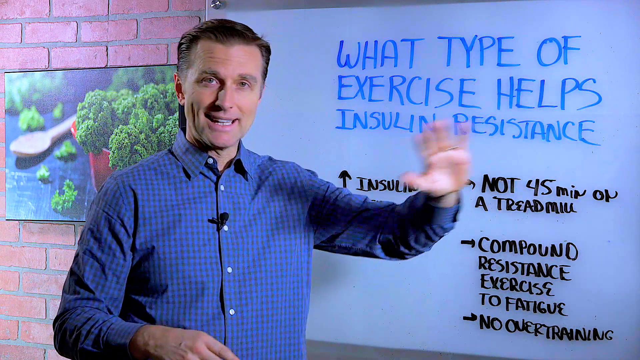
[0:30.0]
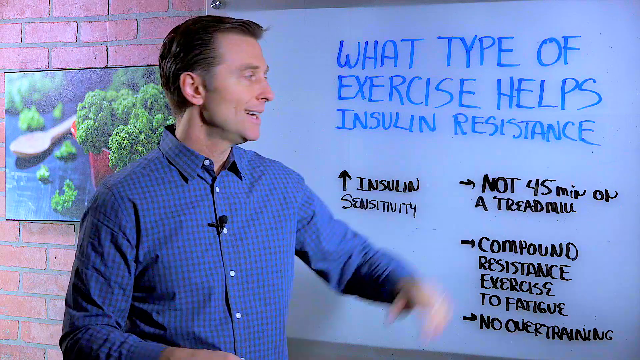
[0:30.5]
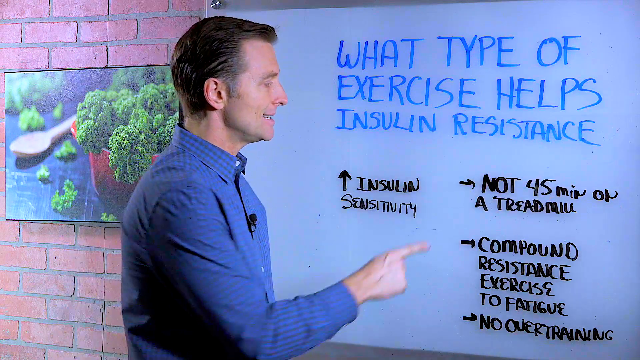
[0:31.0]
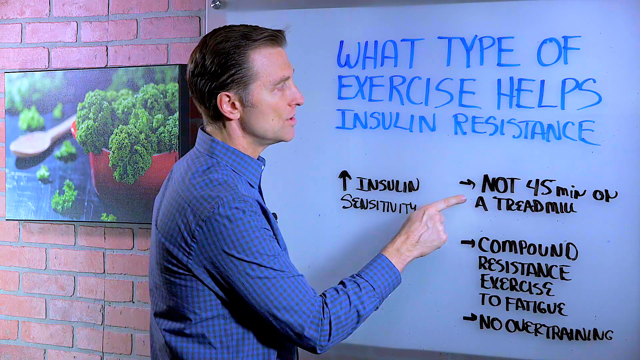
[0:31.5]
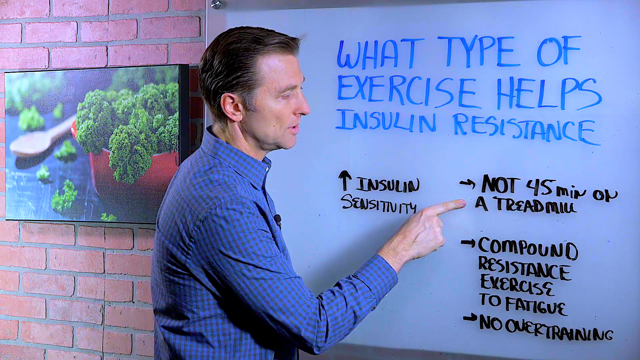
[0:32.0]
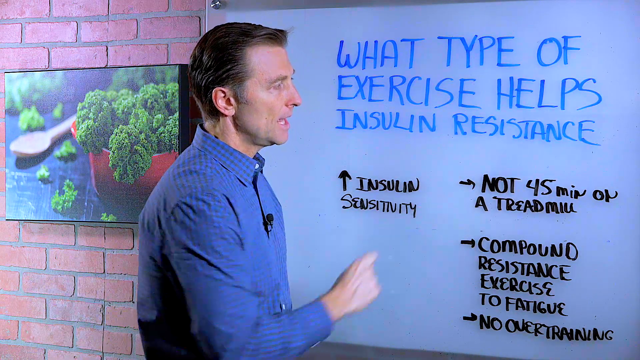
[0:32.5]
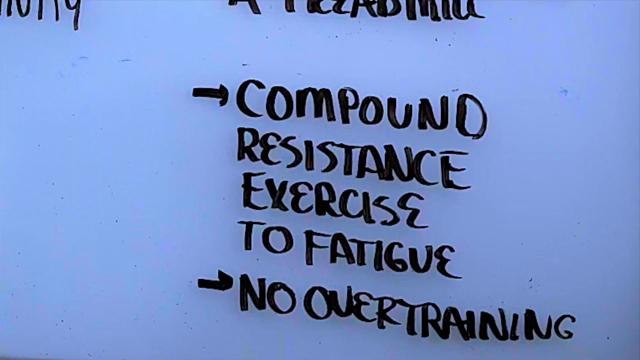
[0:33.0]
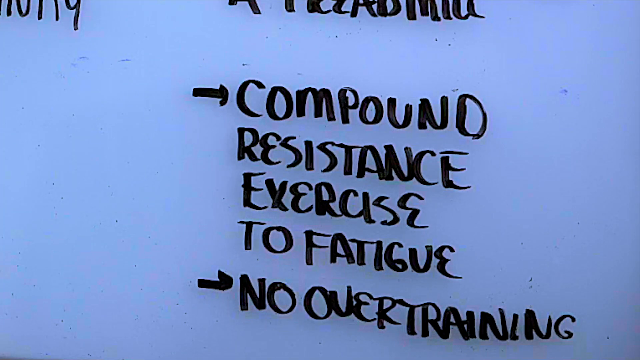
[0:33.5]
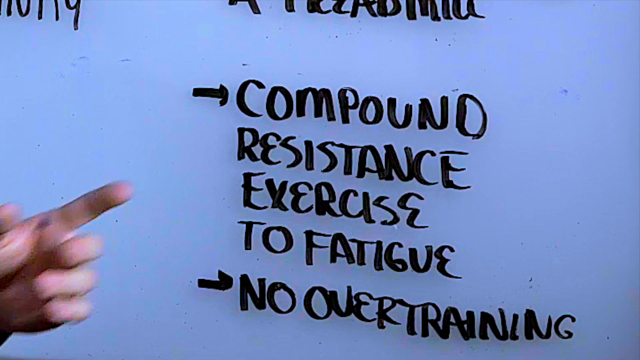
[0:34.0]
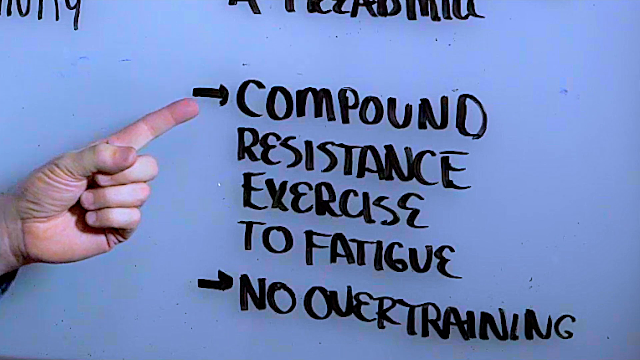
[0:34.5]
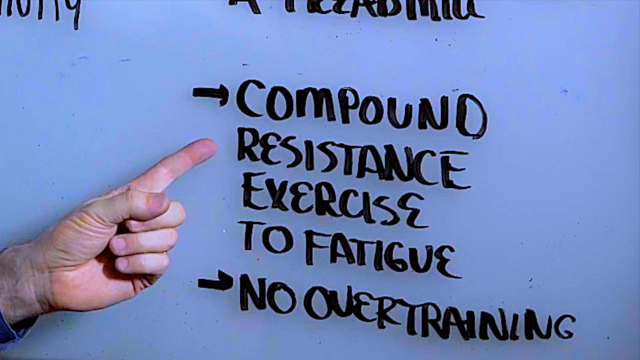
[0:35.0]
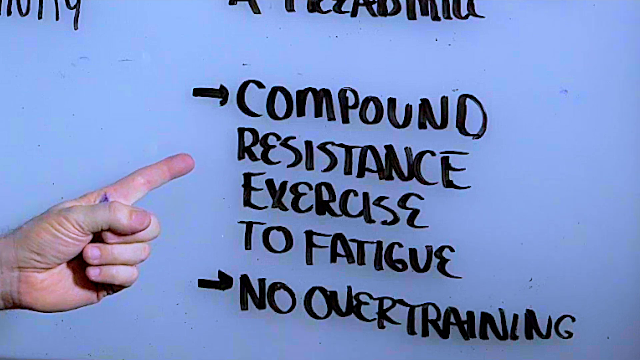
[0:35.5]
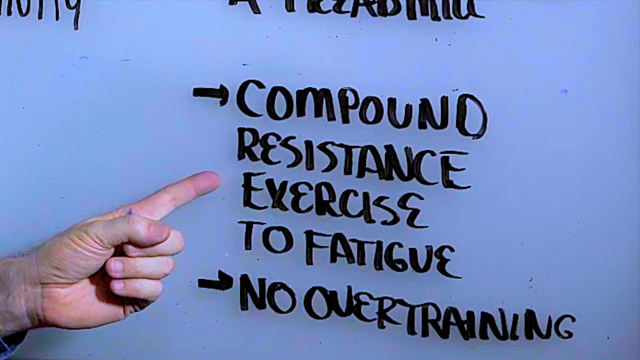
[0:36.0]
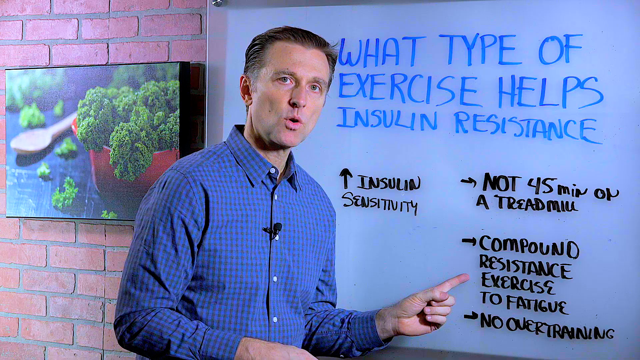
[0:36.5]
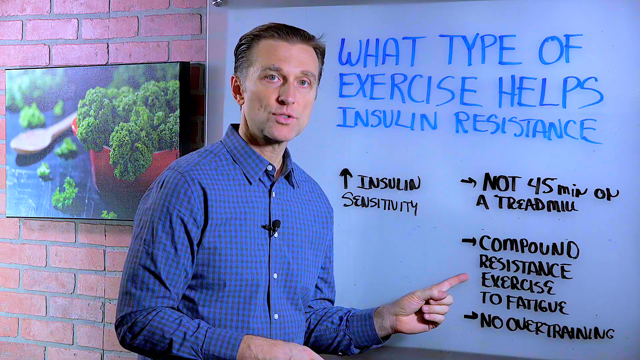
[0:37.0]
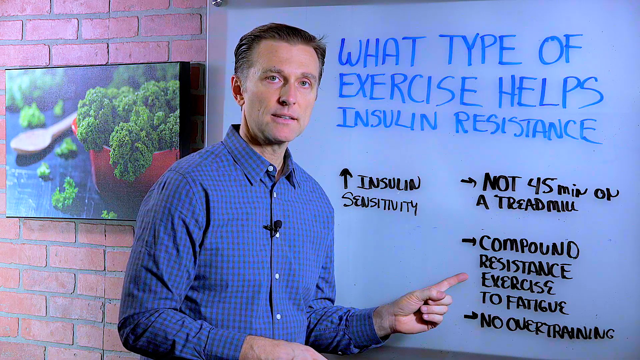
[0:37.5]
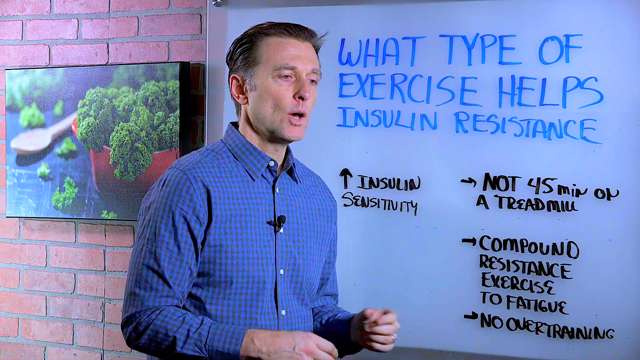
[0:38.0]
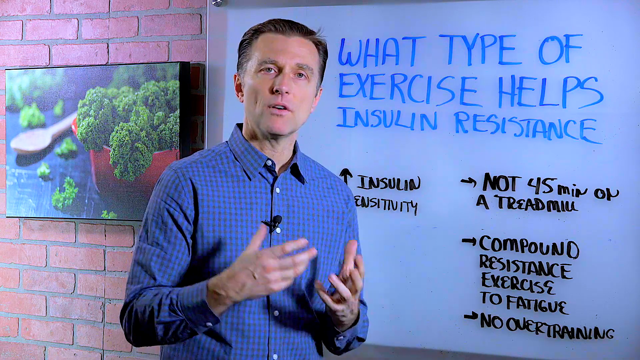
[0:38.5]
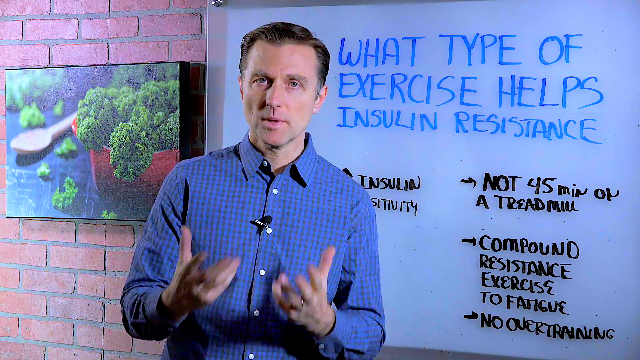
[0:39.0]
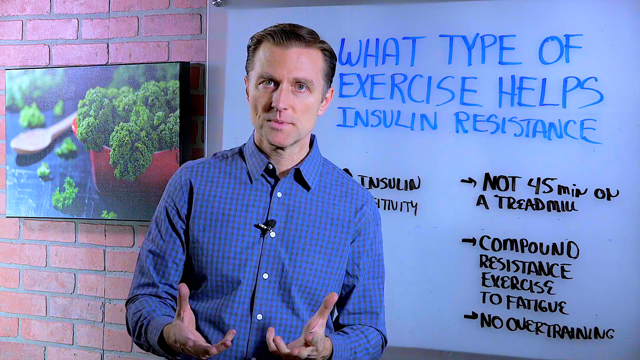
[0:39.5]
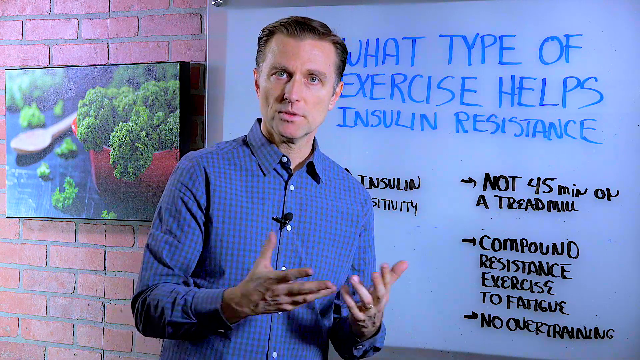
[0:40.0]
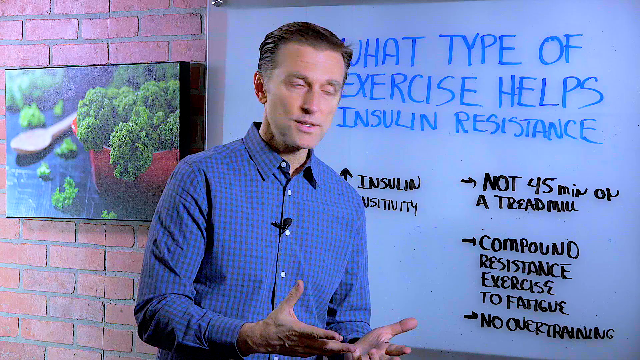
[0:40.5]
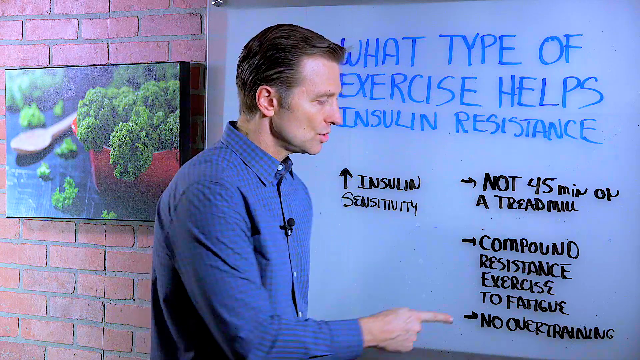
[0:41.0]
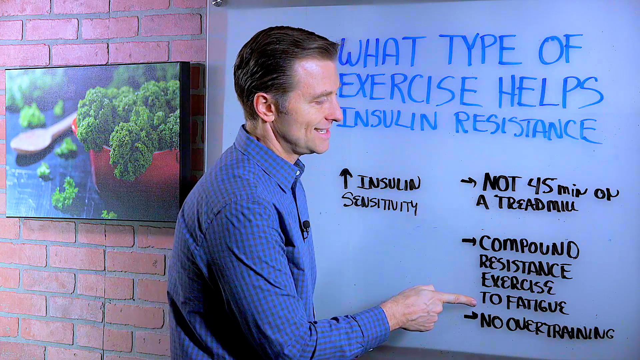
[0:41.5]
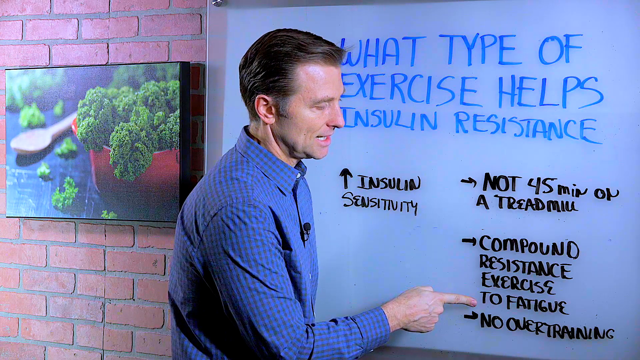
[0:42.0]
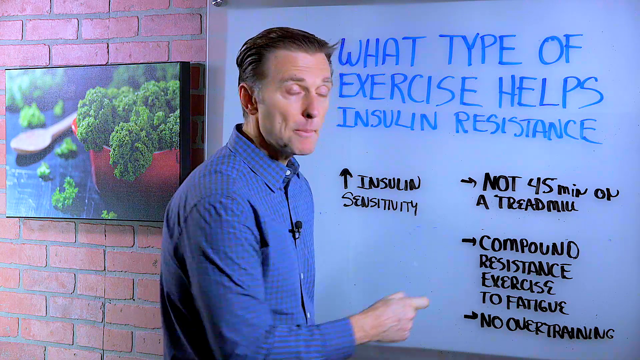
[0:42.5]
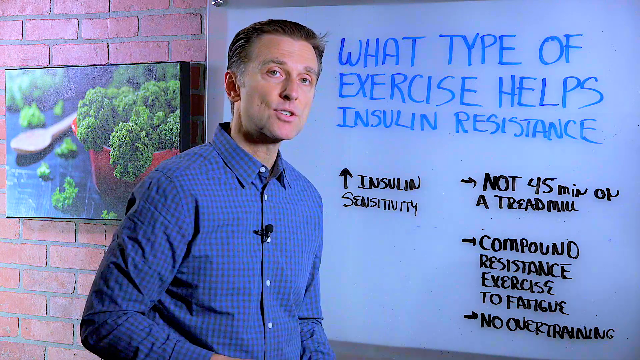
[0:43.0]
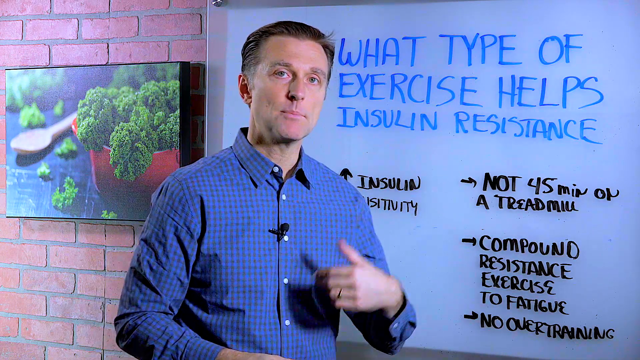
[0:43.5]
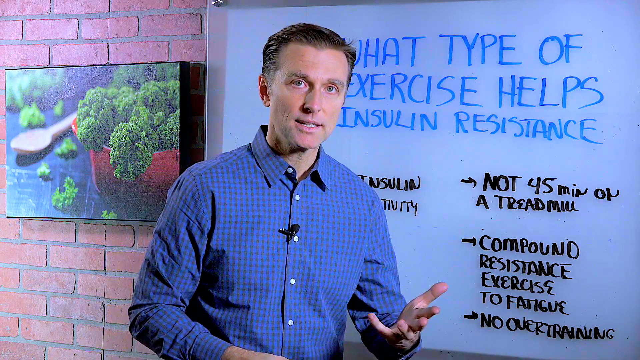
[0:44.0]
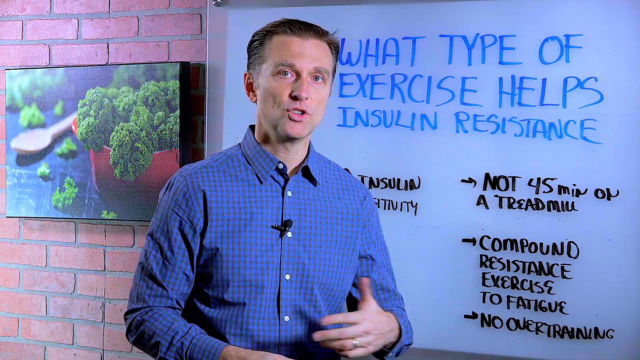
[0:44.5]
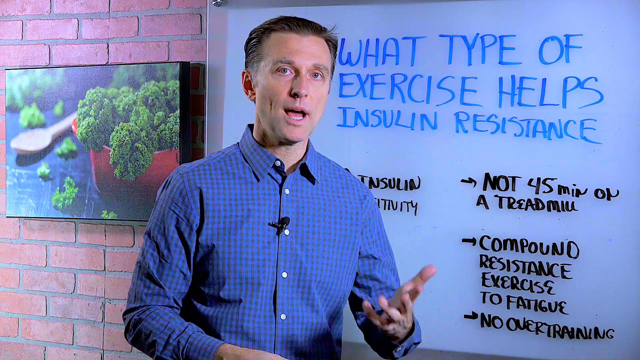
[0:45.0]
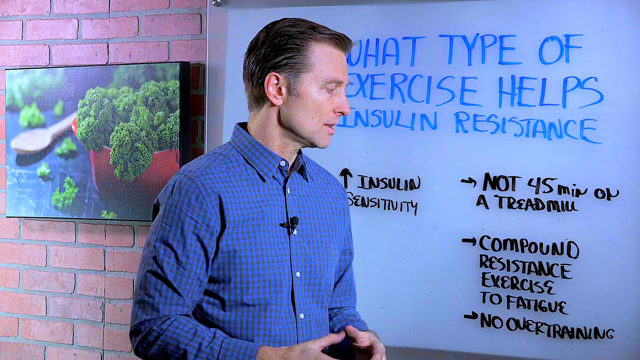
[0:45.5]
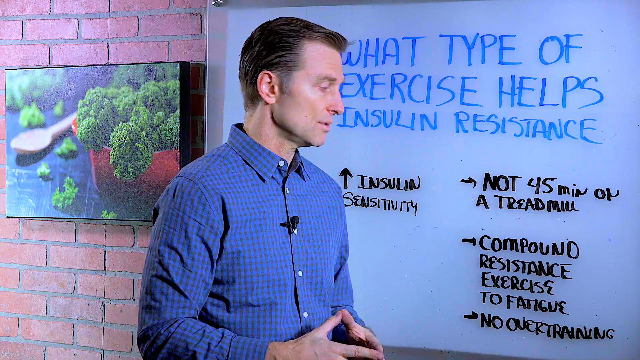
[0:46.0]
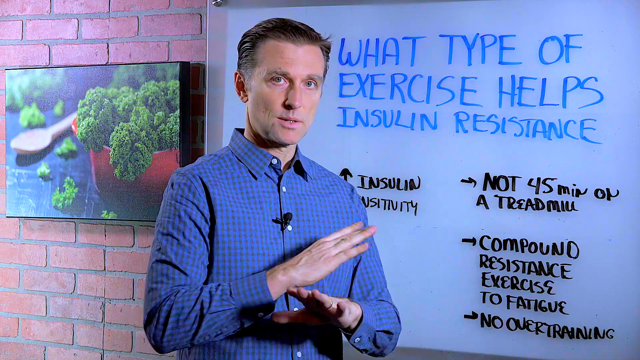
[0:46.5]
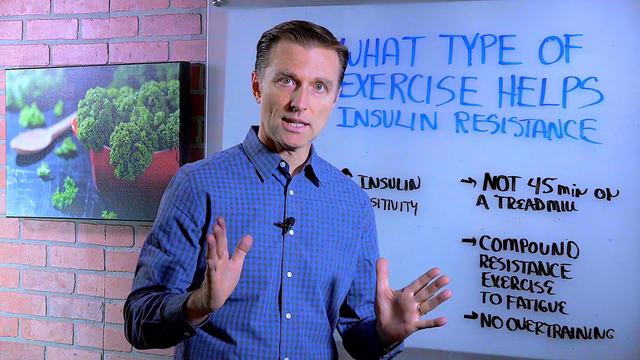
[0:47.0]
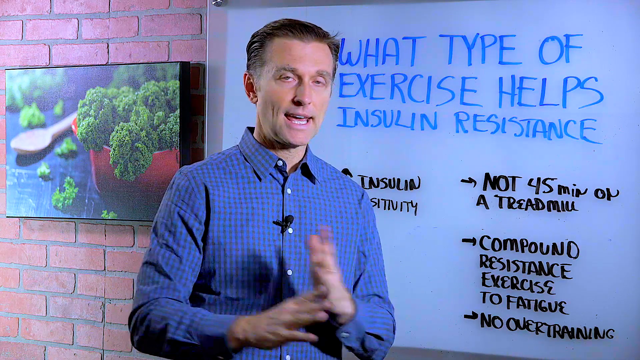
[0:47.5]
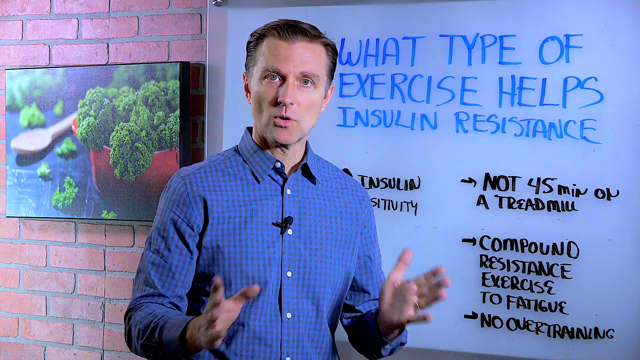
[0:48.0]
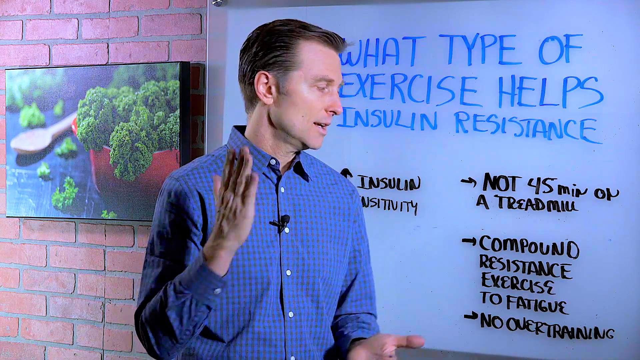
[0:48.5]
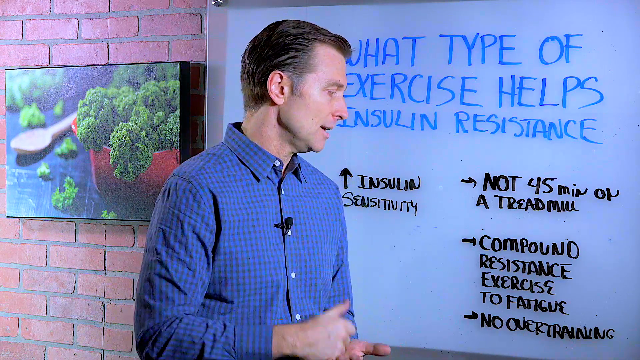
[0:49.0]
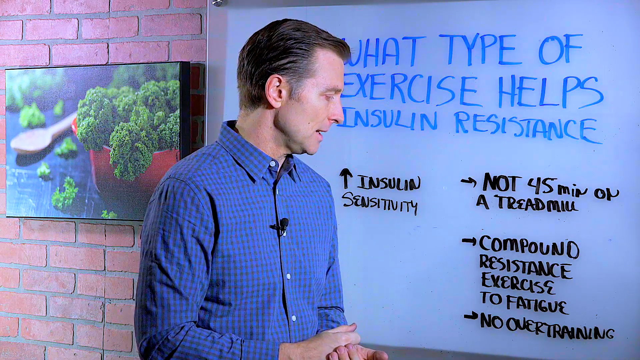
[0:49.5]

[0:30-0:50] The man points to the next thing on the whiteboard list, "compound resistance exercise to fatigue". He wears the same blue plaid, button-up collared shirt and has a microphone attached to his chest. He is still in front of the whiteboard attached to the brick wall, and to his left is a black-framed picture of a red bowl with some lettuce coming out of it and what looks like a wooden spoon to the left of the bowl.